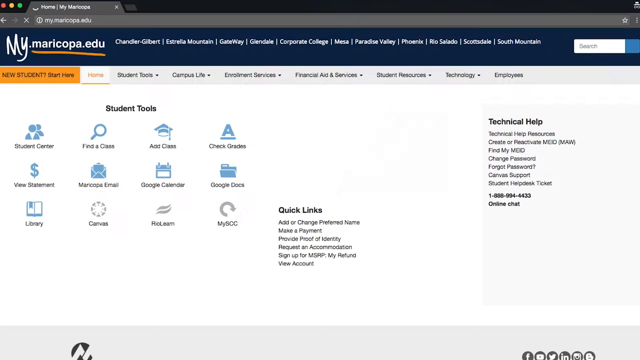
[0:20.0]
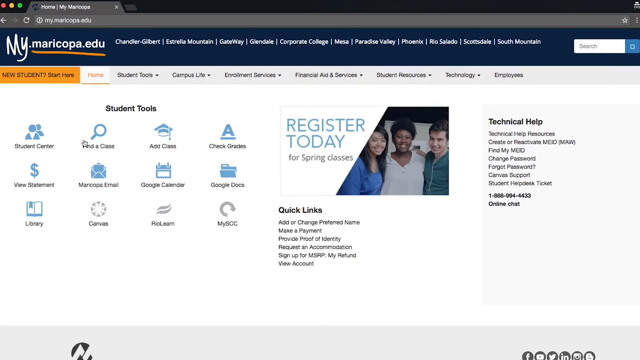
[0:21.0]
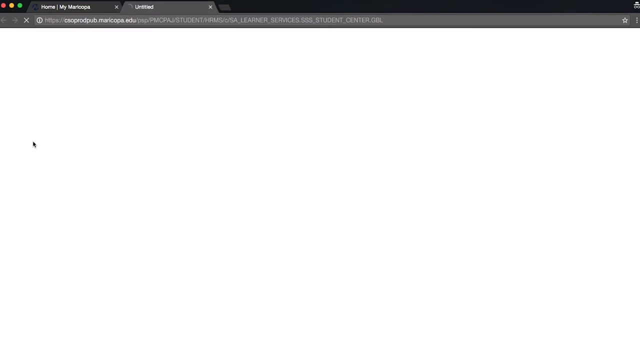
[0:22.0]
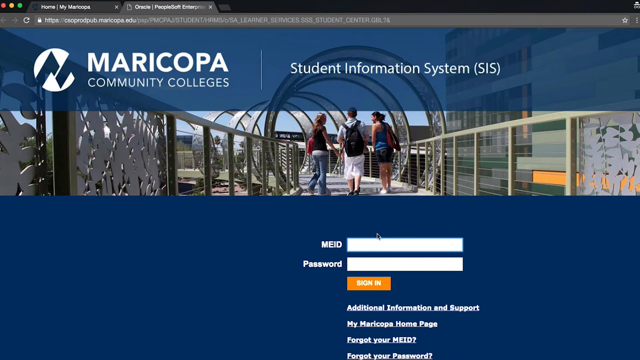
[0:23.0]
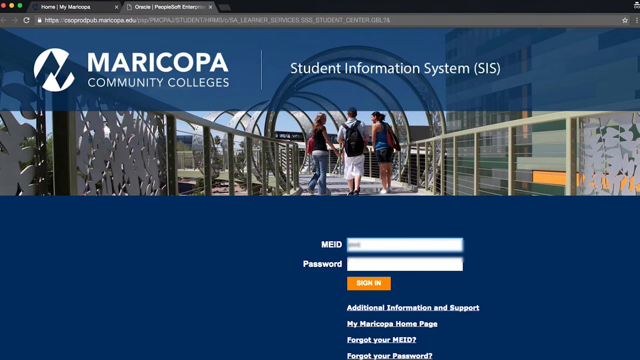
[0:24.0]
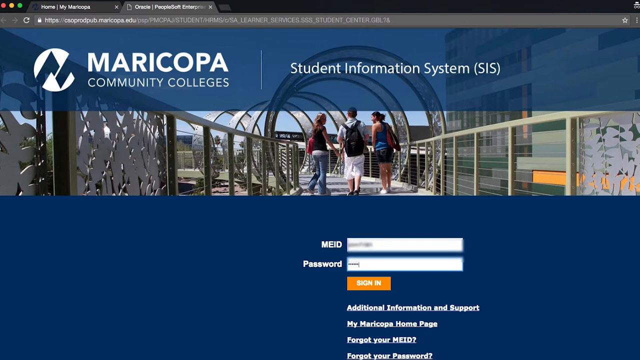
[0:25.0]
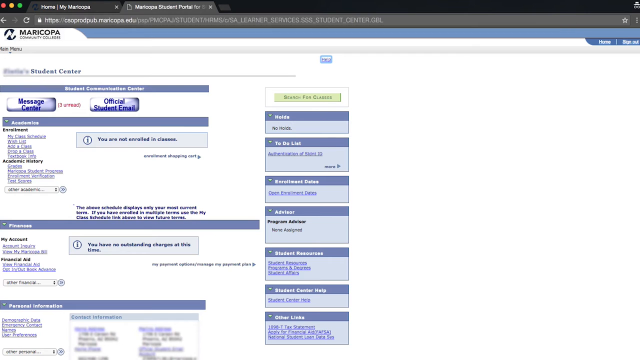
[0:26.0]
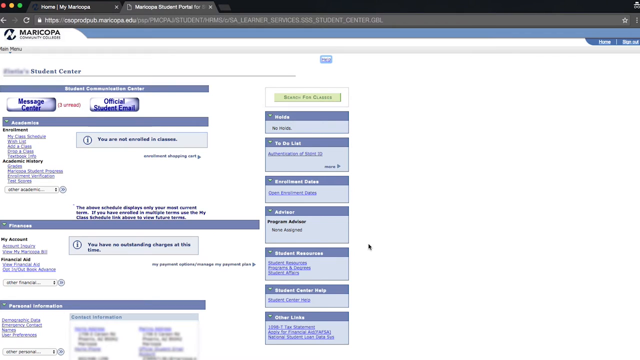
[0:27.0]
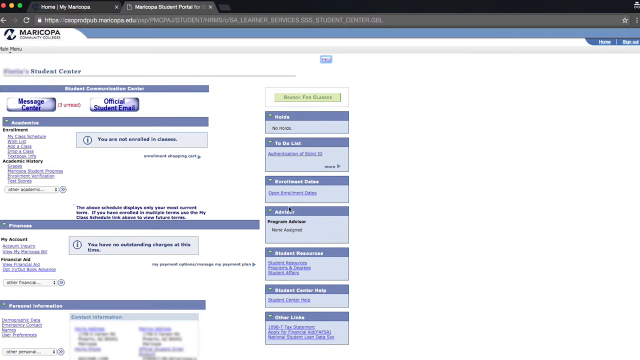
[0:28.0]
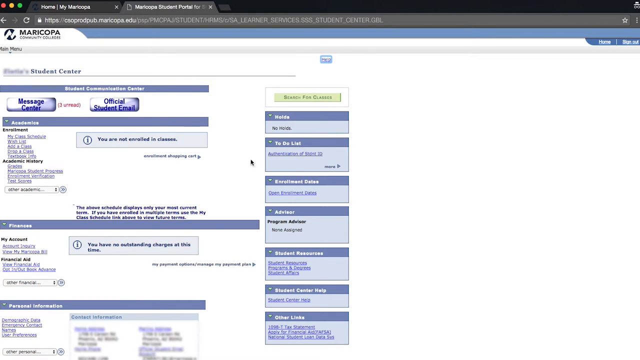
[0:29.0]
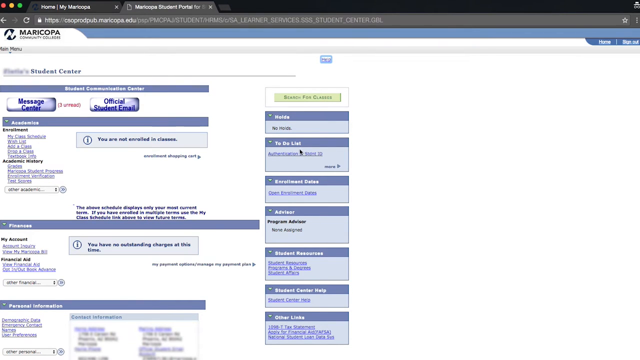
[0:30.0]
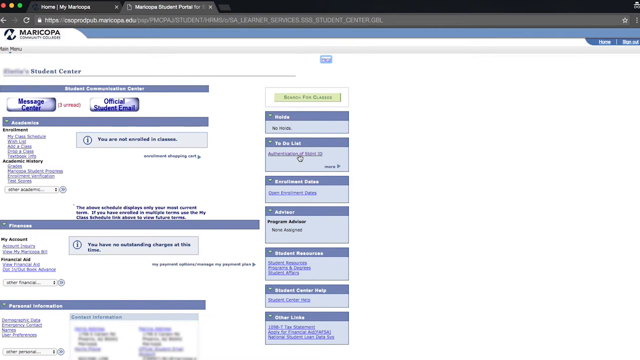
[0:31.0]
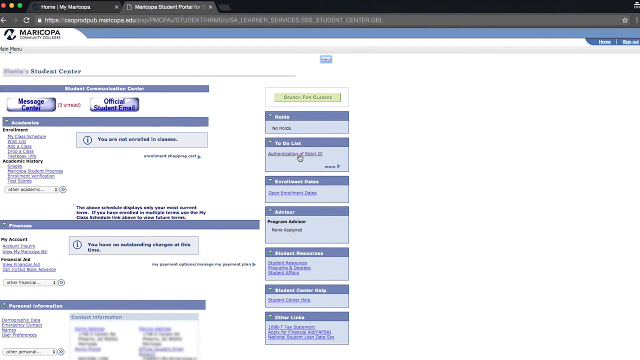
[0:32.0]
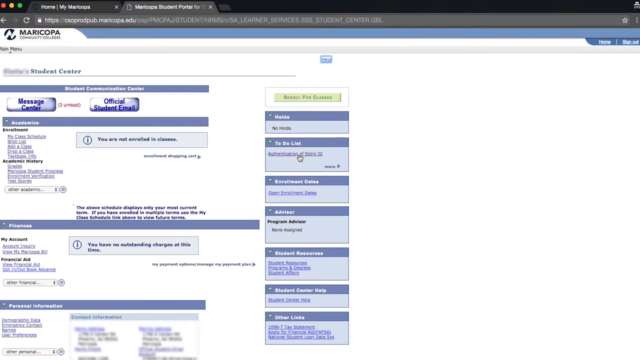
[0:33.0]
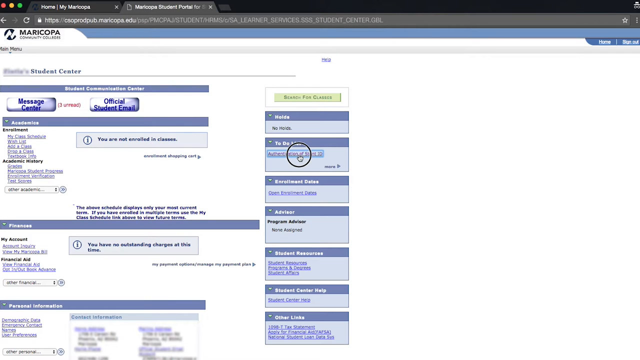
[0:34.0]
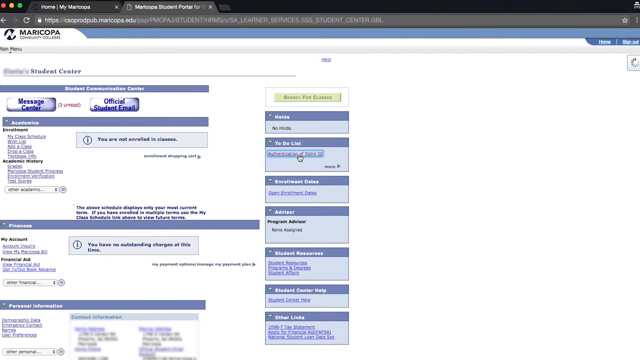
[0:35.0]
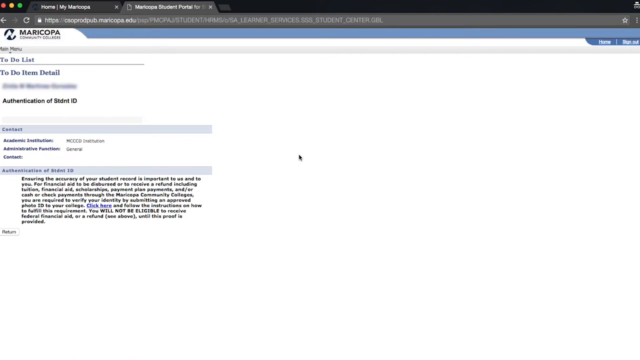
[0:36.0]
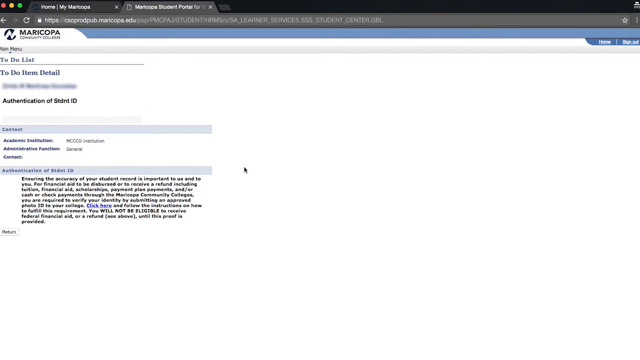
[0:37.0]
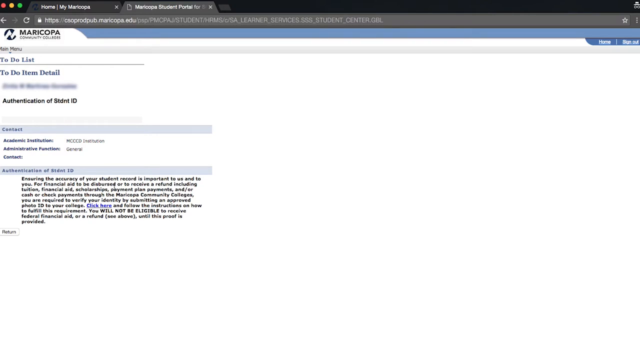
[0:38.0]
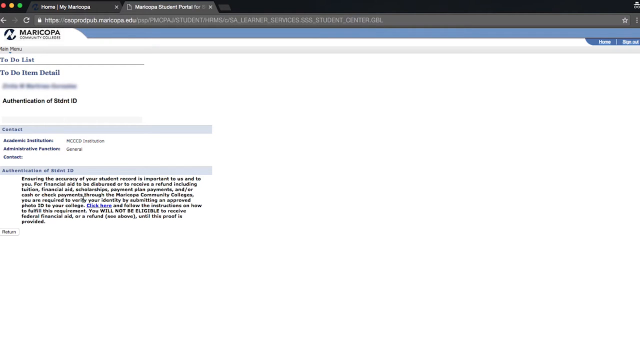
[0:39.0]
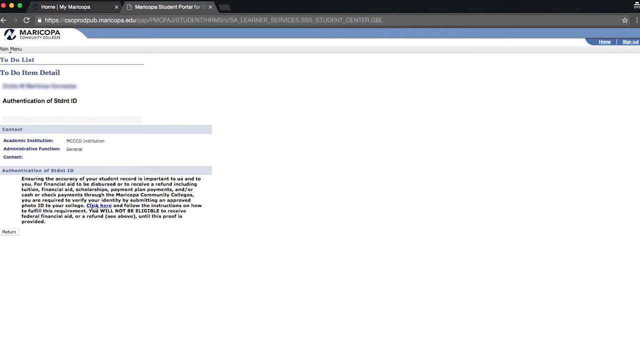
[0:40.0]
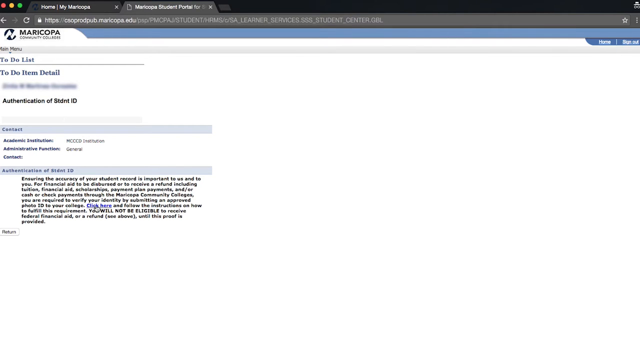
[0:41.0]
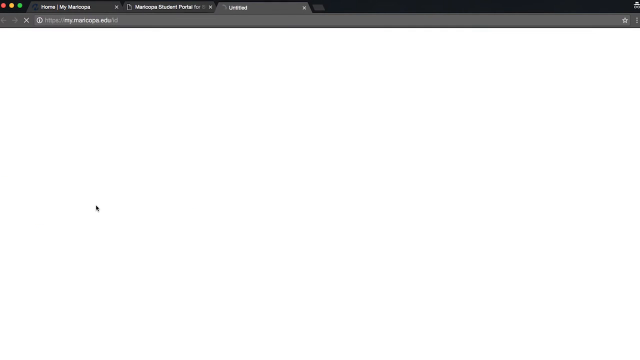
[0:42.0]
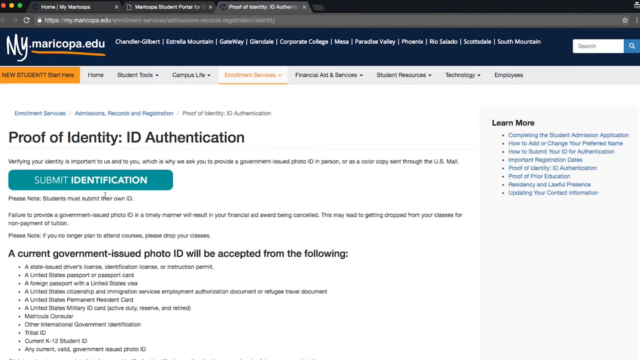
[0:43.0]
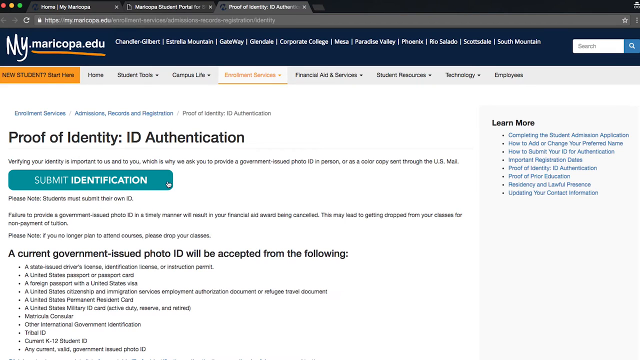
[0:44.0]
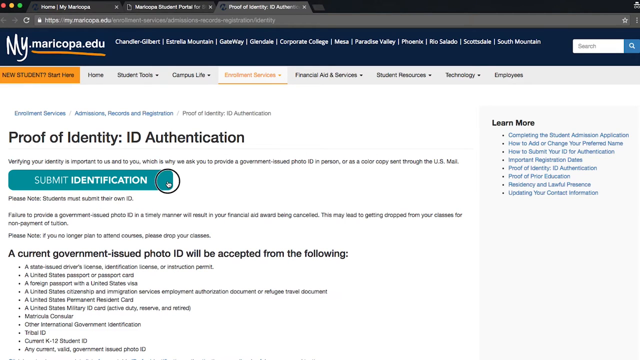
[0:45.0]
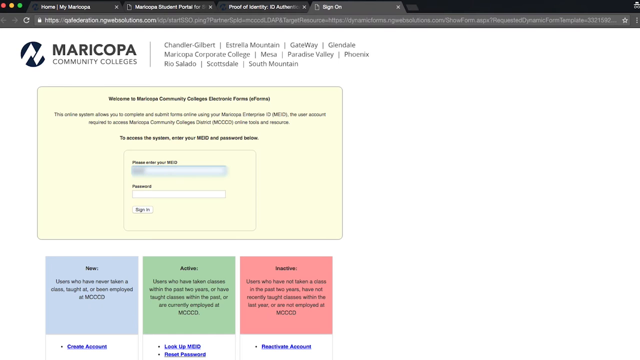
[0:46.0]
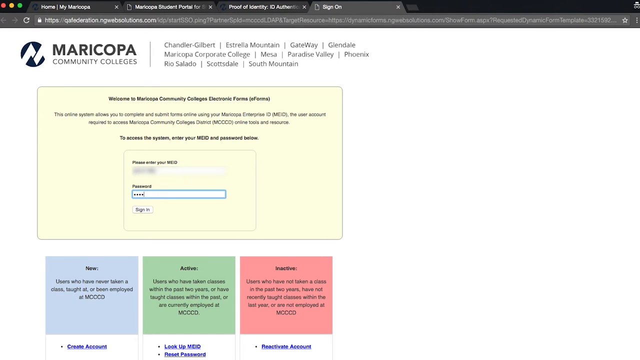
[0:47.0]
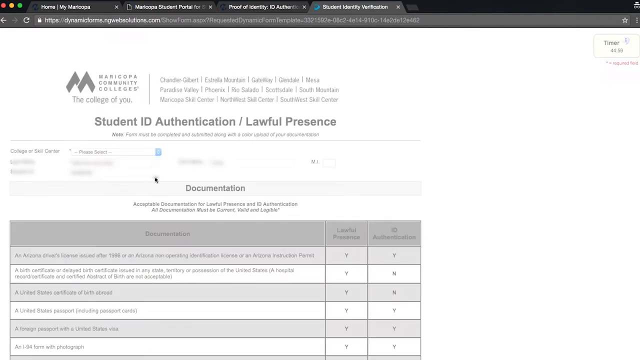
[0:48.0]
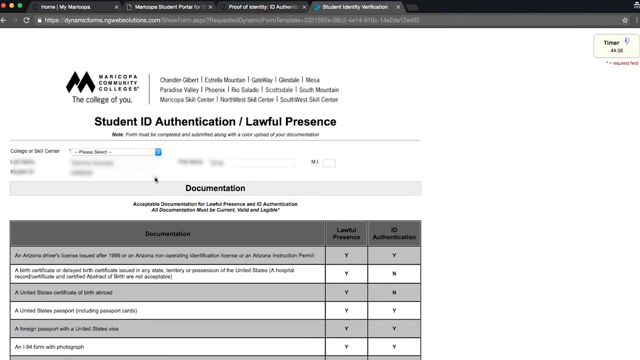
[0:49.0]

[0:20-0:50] The website for mymericopa.edu is on screen, showing the home screen. It offers the locations of different campuses, a button for new students to start there, and sections for student tools, campus life, enrollment services, financial aid services, student resources, technology, and employees. The view goes to the student center, represented by stick figures, which leads to the Mericopa Community College sites, and then the instructor logs into the website. The student center page has white text. The user clicks the to-do list link, which opens a page with things the user has to complete, such as authentication of the student ID. The user reads through the passage shown and clicks a link within it, which leads to a different page asking them to prove their ID and submit identification. The user then logs into a different website to enter their ID.